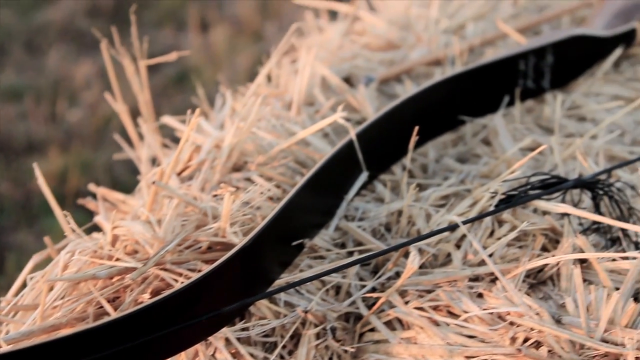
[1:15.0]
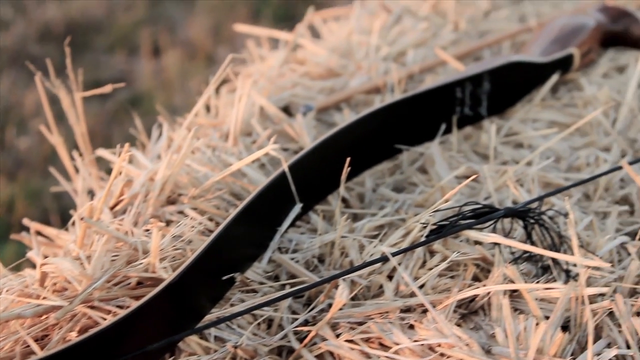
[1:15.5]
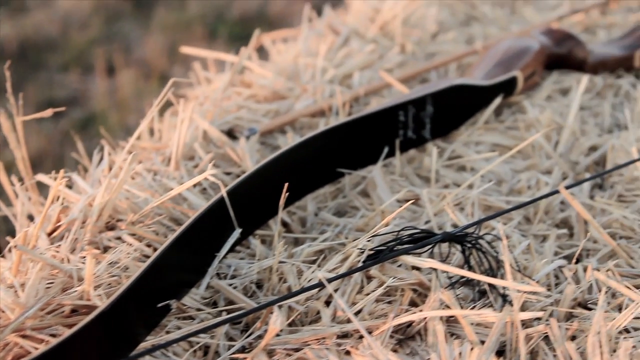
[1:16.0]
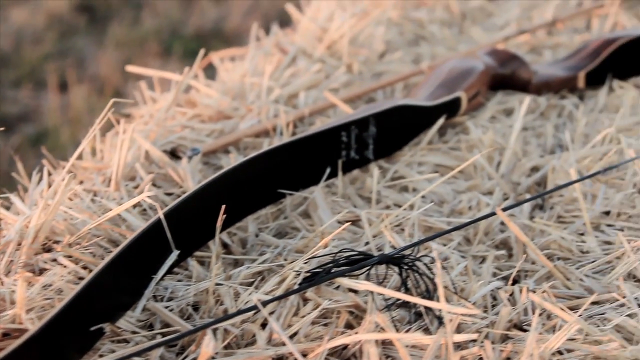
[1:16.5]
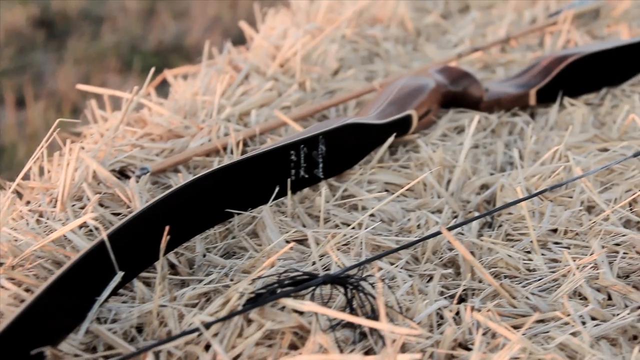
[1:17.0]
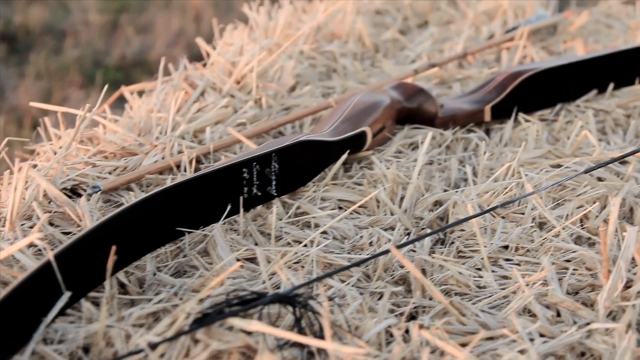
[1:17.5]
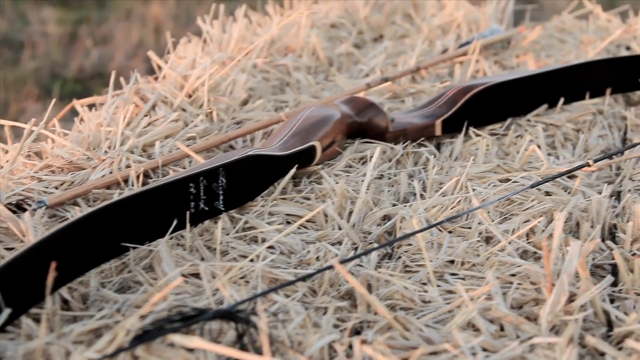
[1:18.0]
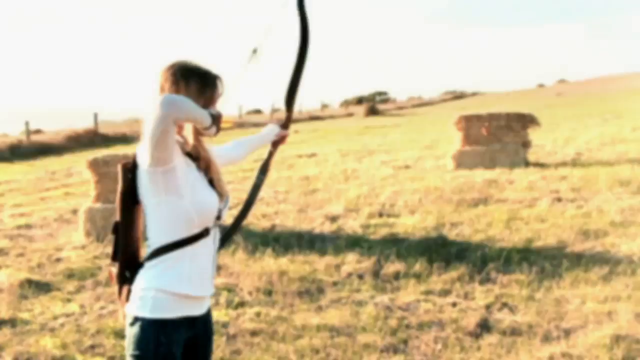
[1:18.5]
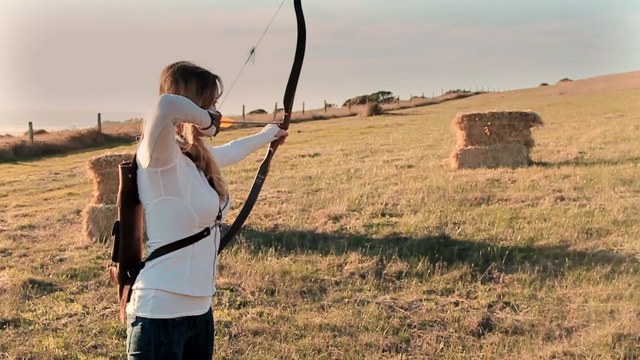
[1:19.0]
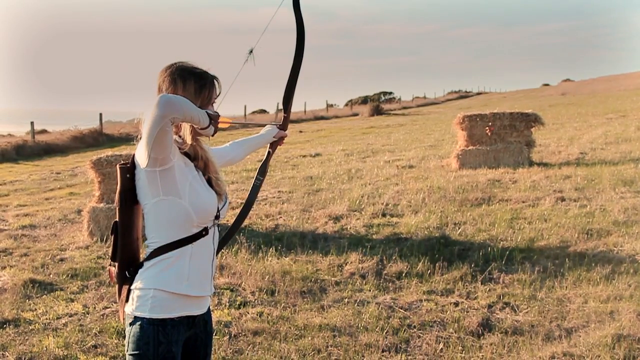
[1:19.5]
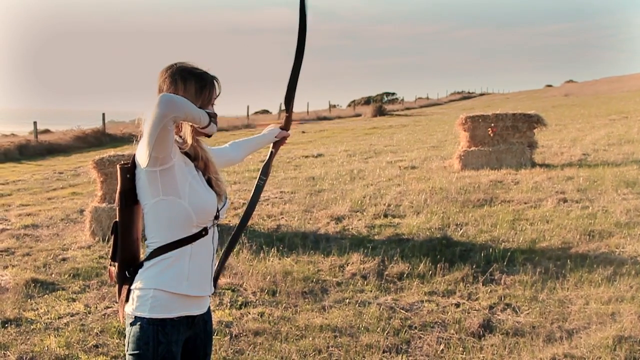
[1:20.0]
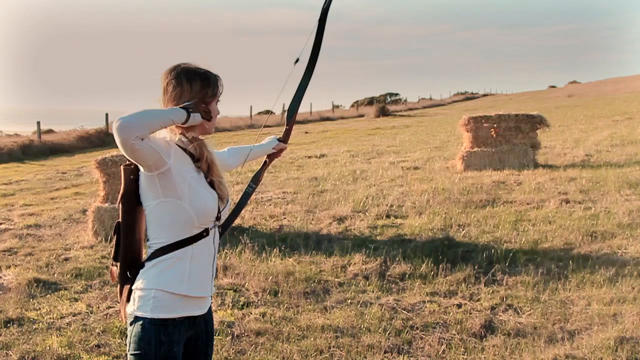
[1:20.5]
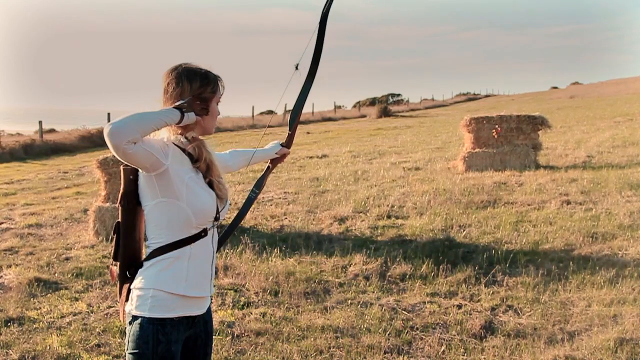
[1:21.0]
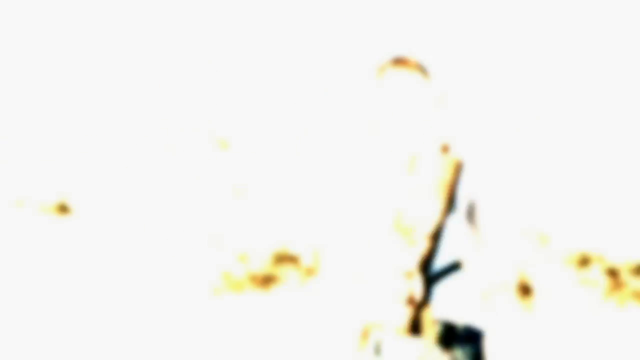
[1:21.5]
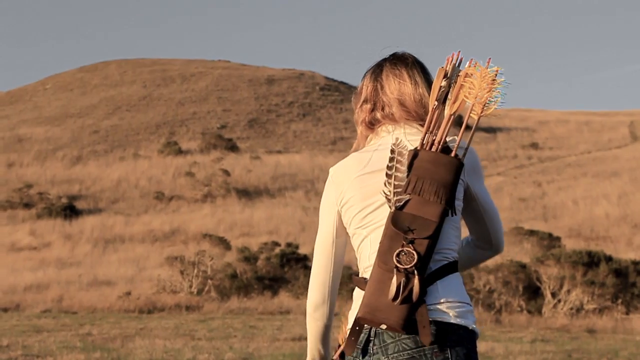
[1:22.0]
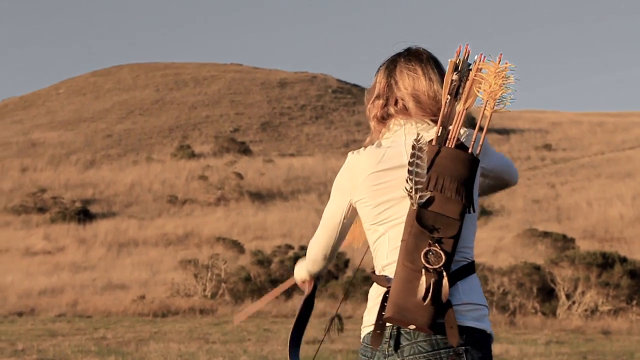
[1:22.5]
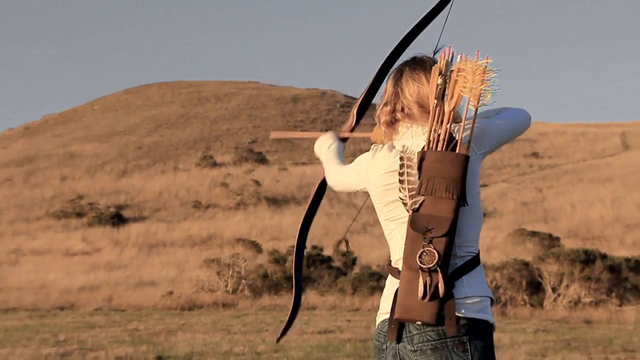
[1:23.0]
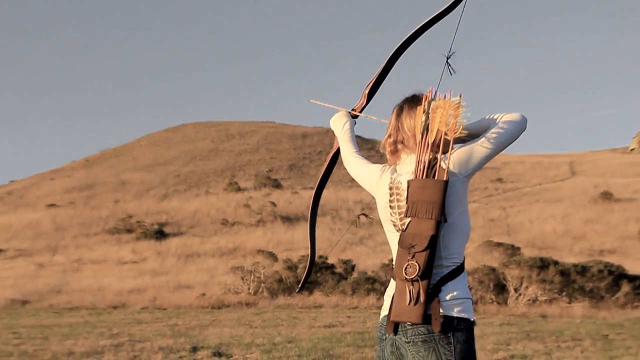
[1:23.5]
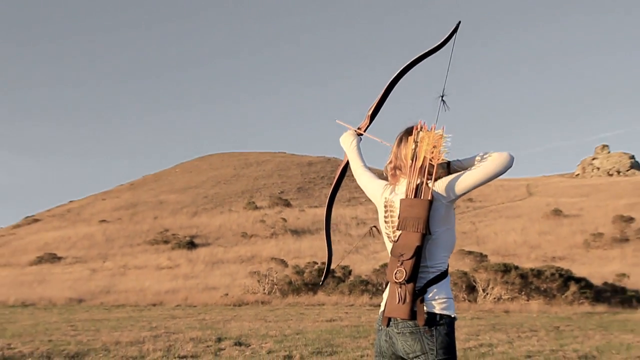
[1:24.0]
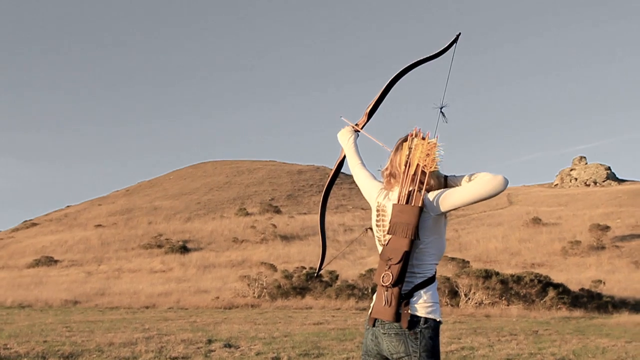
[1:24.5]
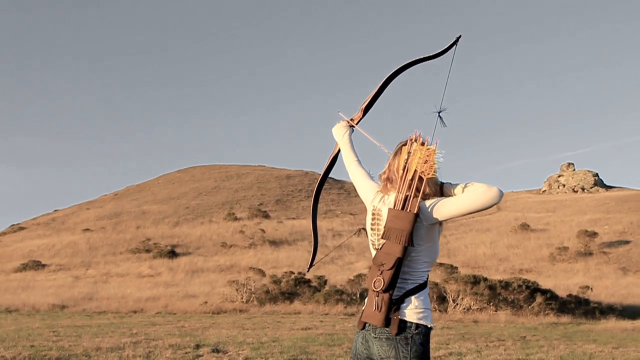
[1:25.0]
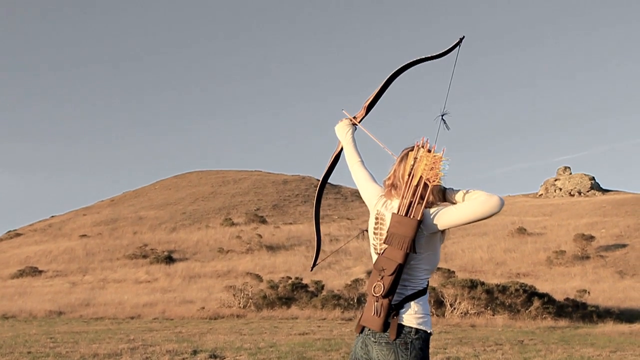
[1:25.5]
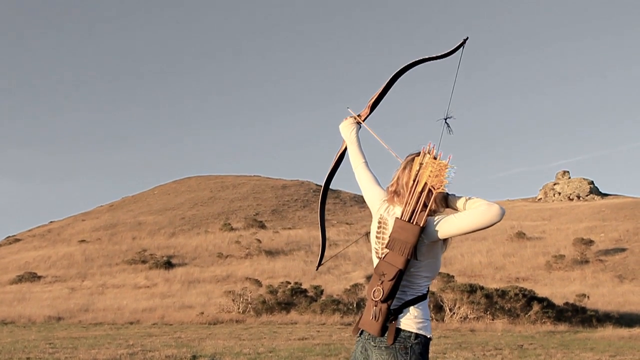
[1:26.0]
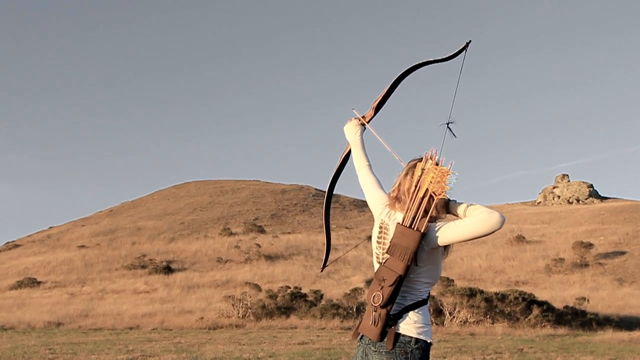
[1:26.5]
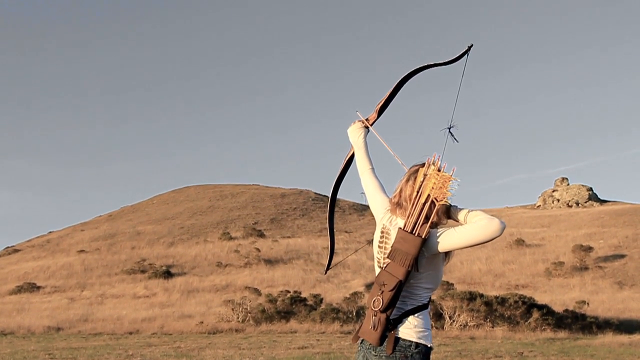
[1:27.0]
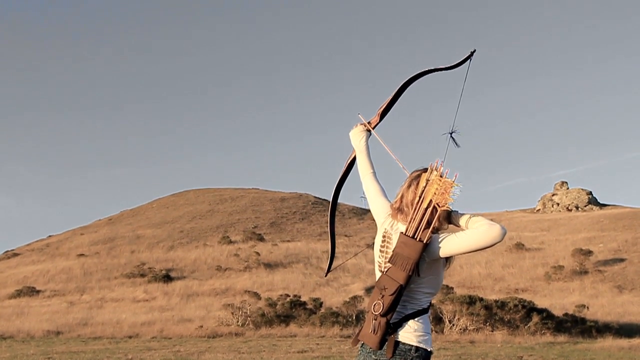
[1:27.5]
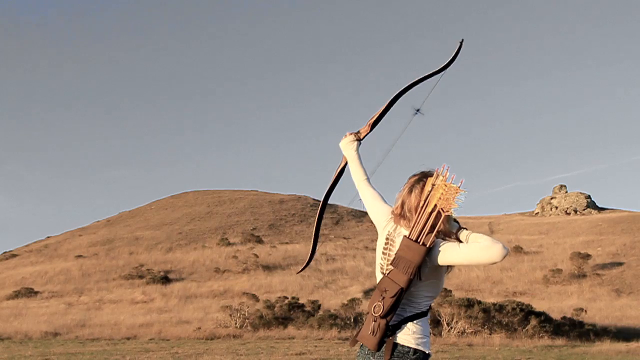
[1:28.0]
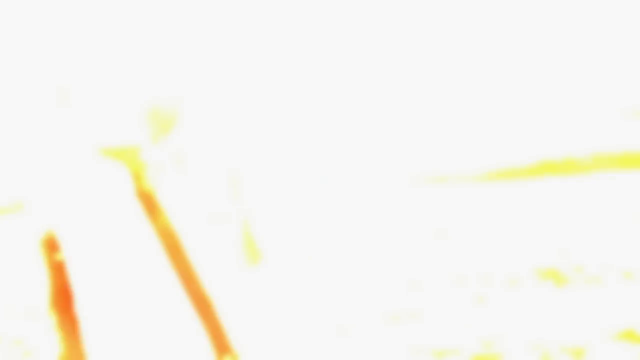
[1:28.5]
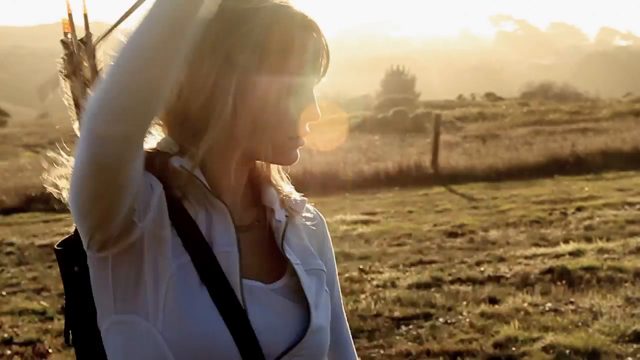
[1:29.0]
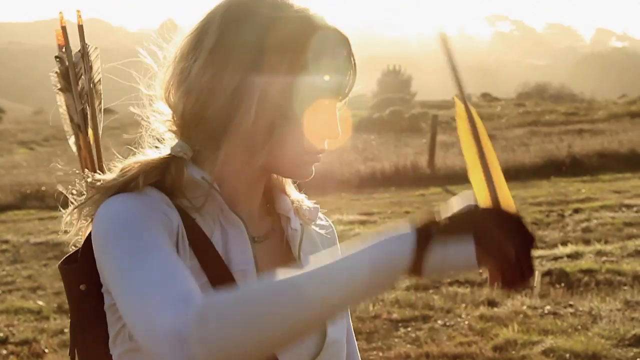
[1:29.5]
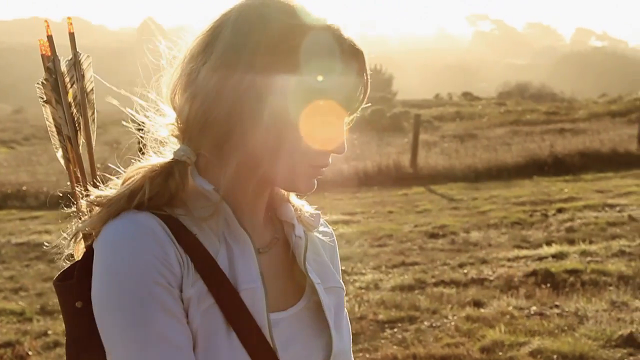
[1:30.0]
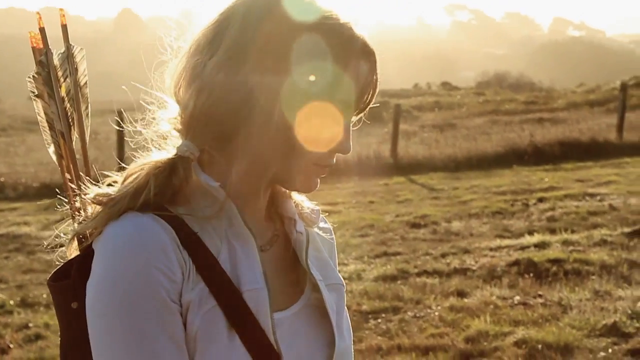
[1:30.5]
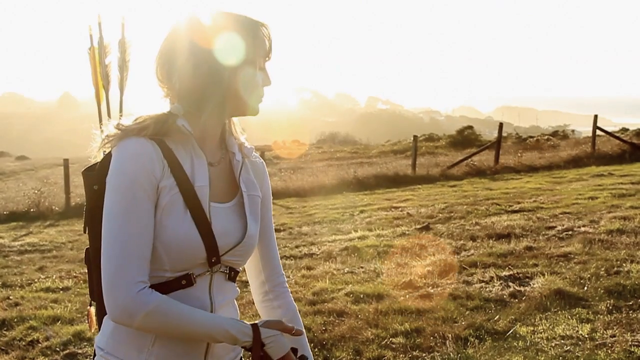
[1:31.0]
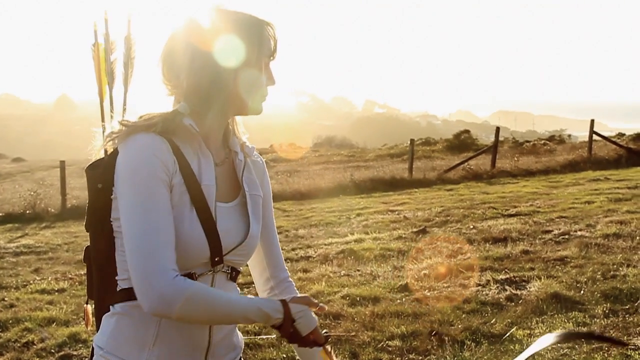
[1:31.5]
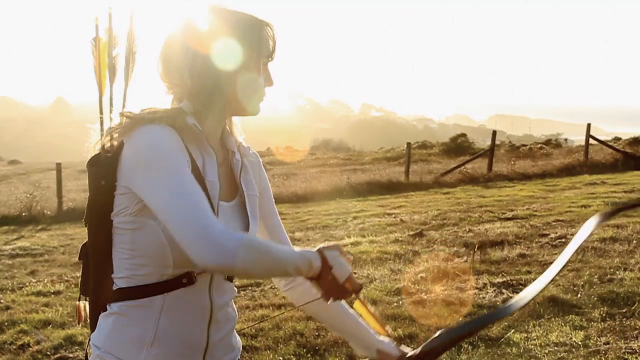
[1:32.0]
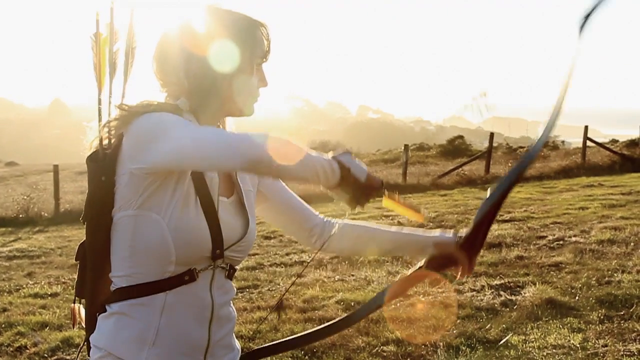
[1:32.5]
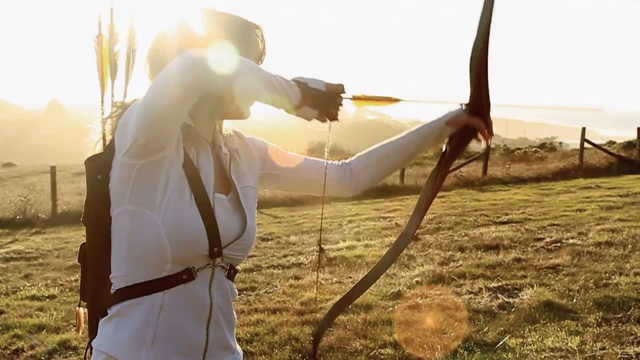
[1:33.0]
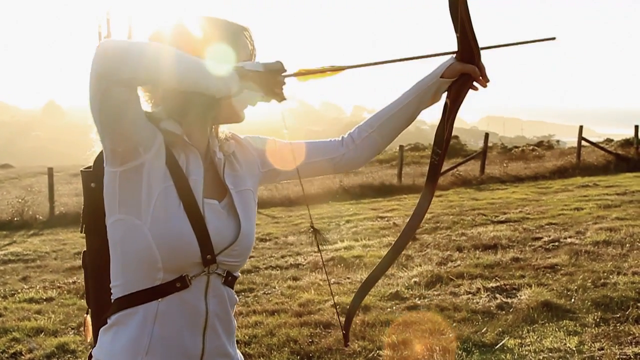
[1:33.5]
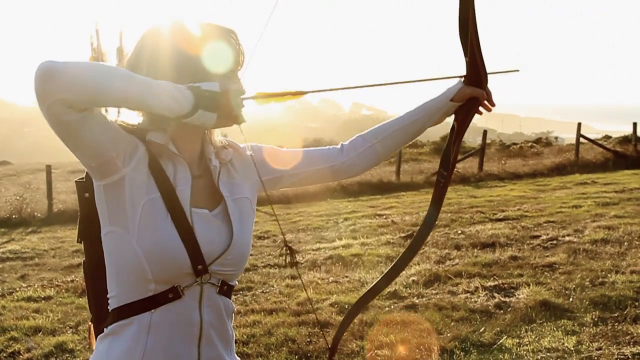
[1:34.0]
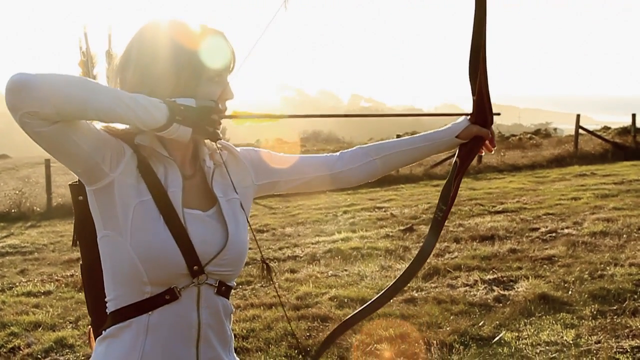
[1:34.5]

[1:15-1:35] A very close view shows the bow and arrow lying on a bale of hay, with the camera moving both slowly and quickly. After a flash, the girl appears with her arms raised slightly by her head, holding the bow and arrow and pointing it at one of the bales of hay. She releases it and the arrow goes into the center of the bale. The camera flashes, and the girl is seen standing with a very mountainous, hilly area in the background. She has a variety of bows in a bag on her back. She raises the bow and arrow again, this time pointing it toward the sky, and shoots upward into the air. After what seems to be a flash, a very close shot shows her with the sun reflecting on her face and the arrows on her back as she prepares to shoot another arrow.